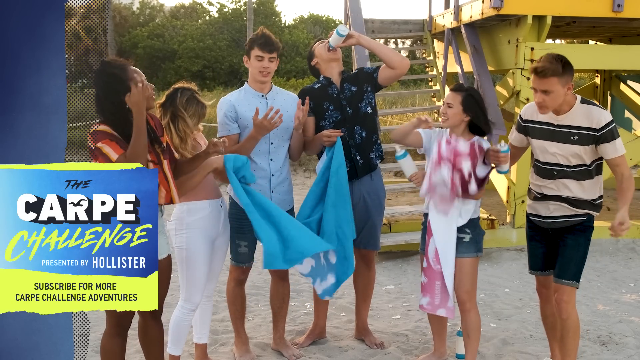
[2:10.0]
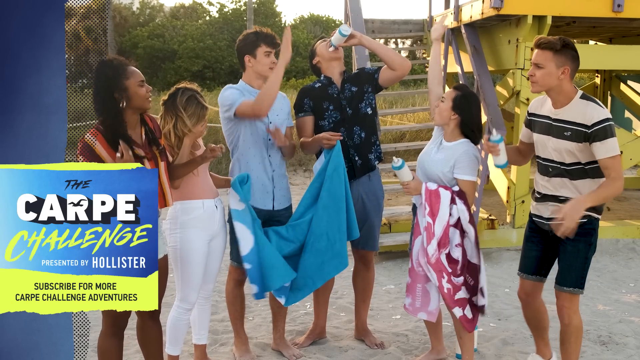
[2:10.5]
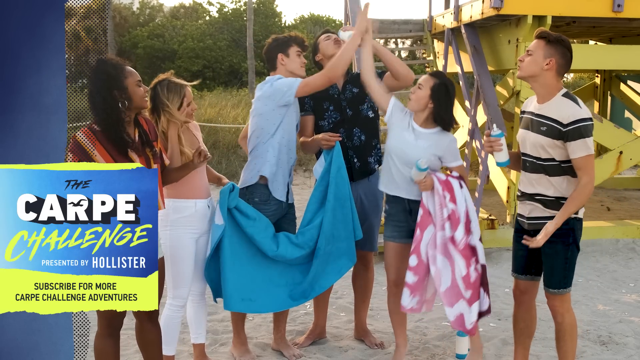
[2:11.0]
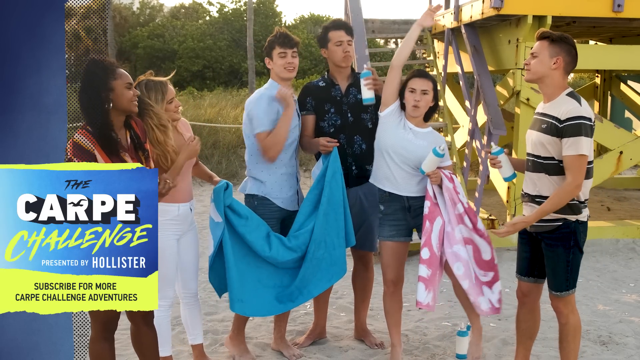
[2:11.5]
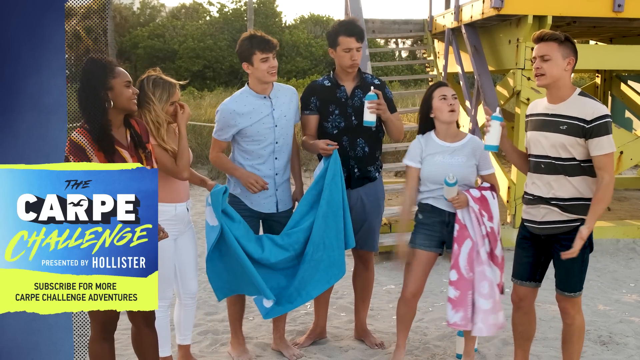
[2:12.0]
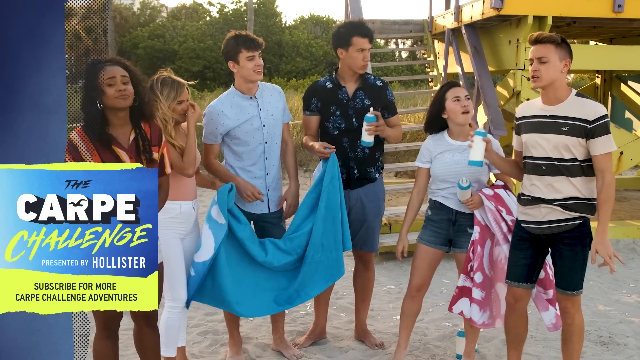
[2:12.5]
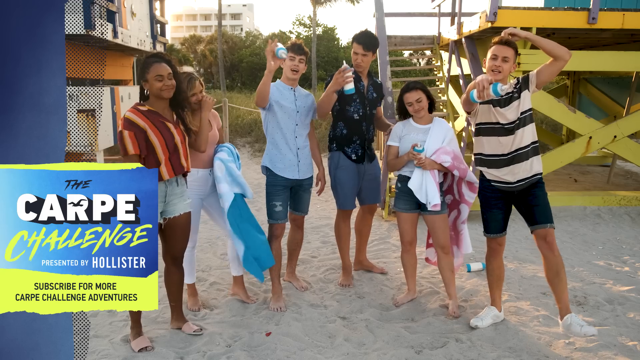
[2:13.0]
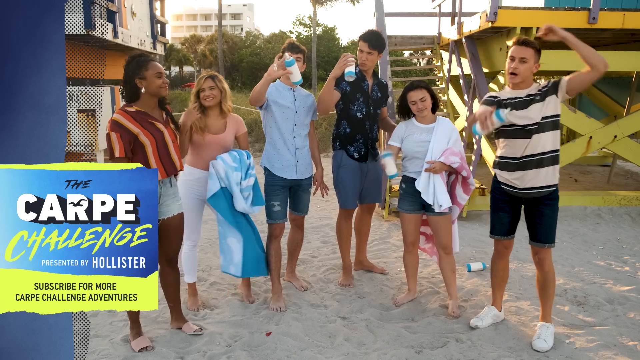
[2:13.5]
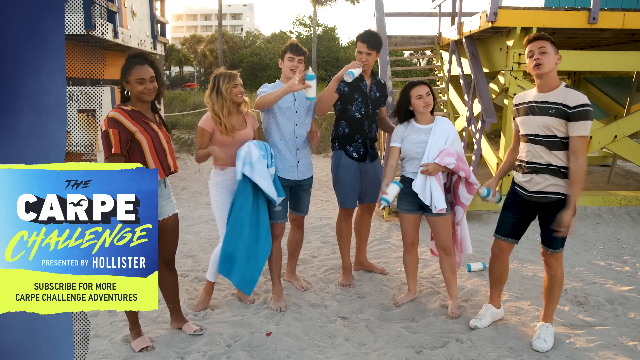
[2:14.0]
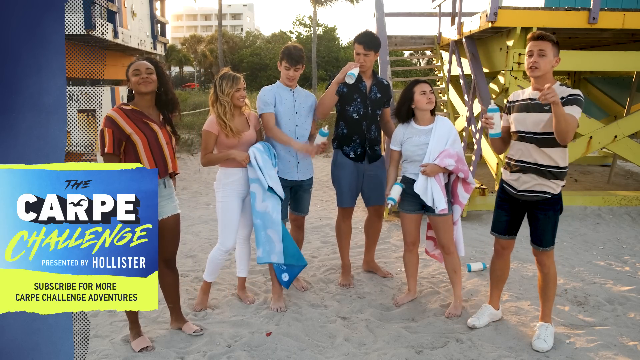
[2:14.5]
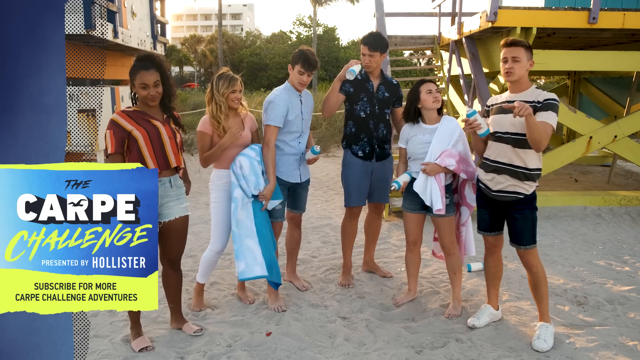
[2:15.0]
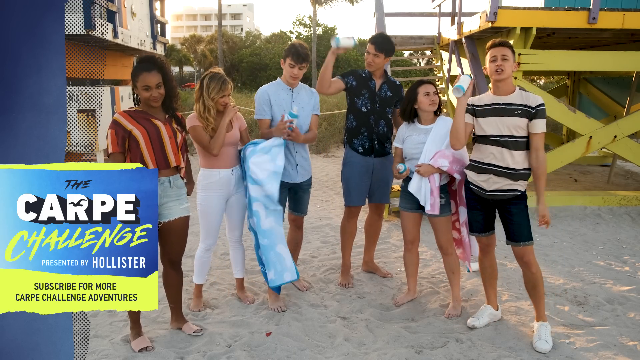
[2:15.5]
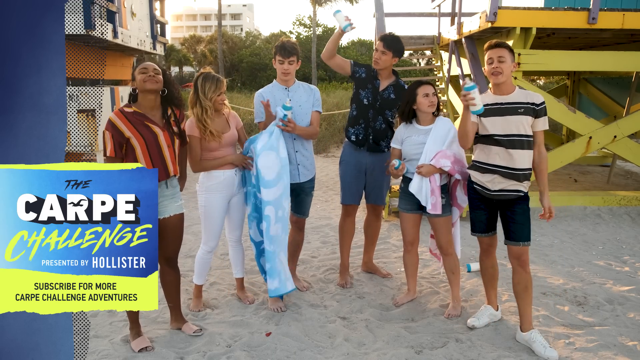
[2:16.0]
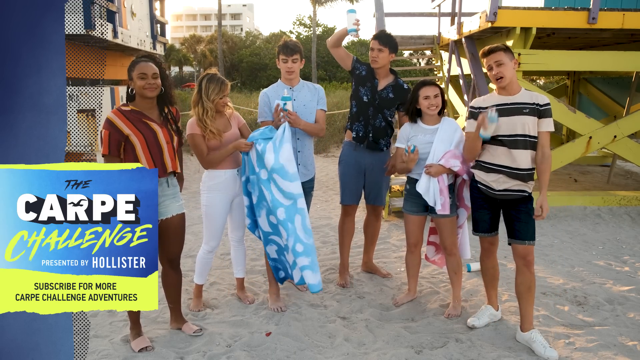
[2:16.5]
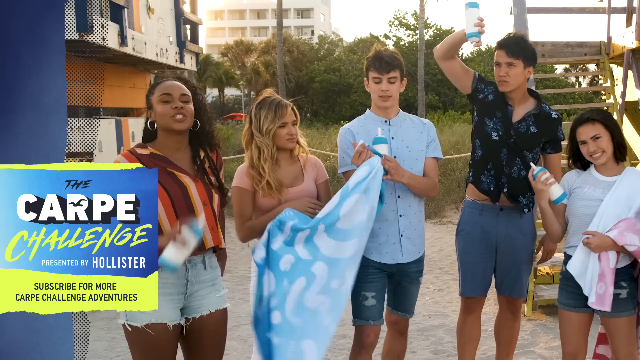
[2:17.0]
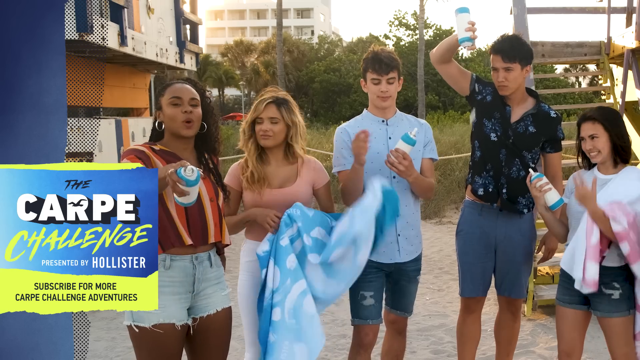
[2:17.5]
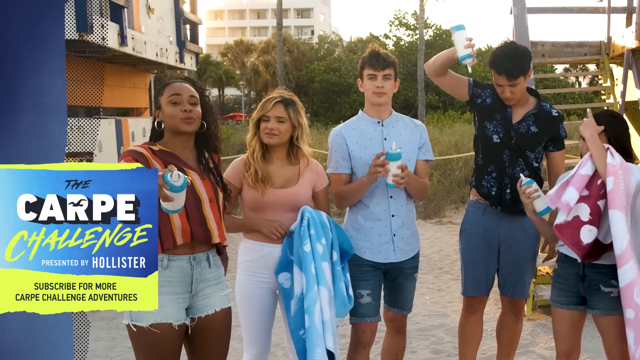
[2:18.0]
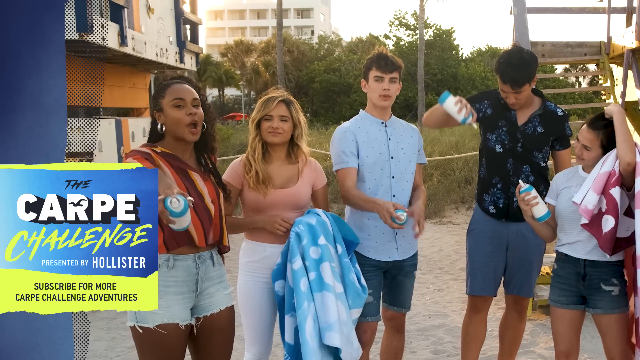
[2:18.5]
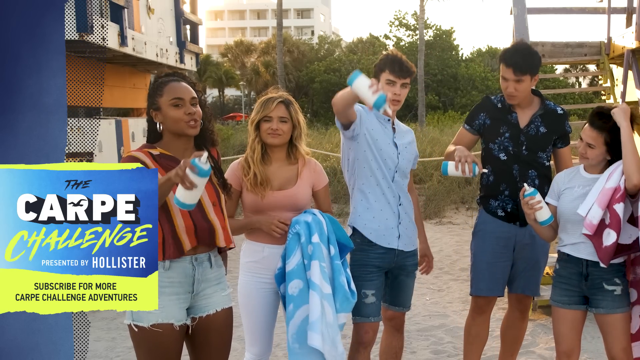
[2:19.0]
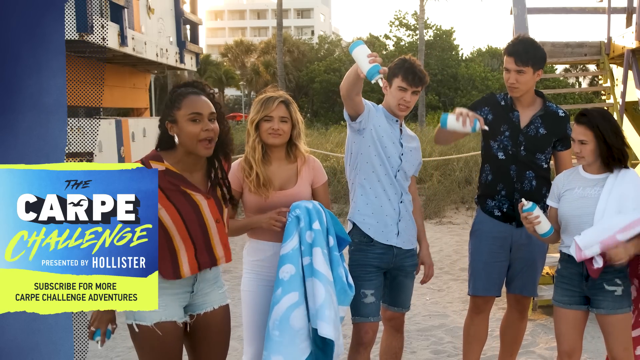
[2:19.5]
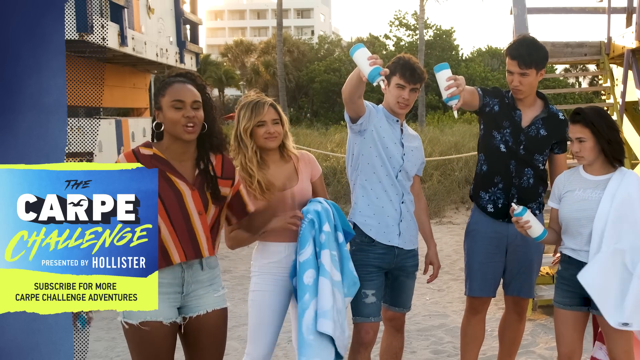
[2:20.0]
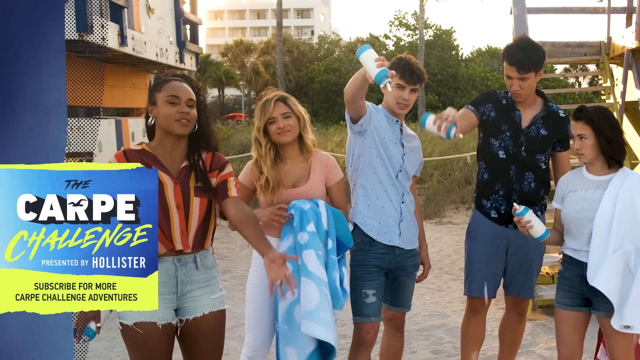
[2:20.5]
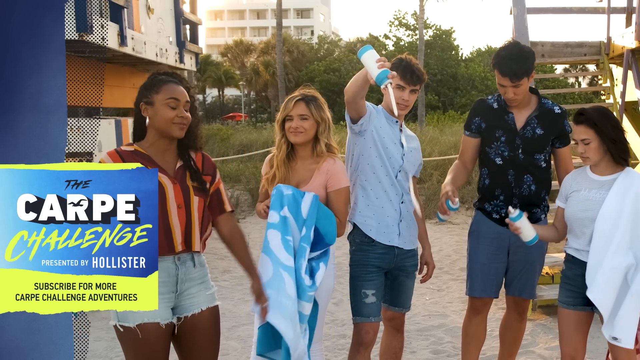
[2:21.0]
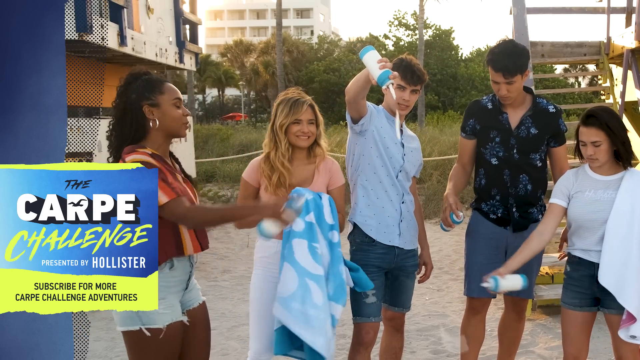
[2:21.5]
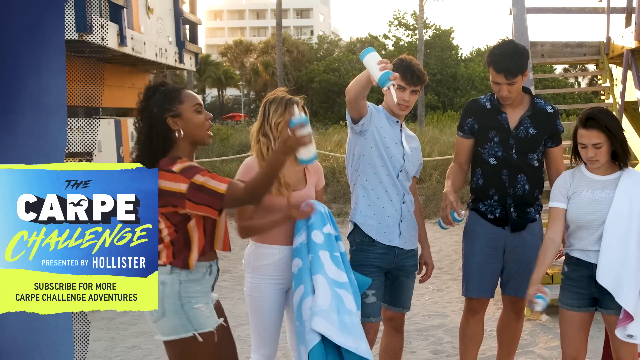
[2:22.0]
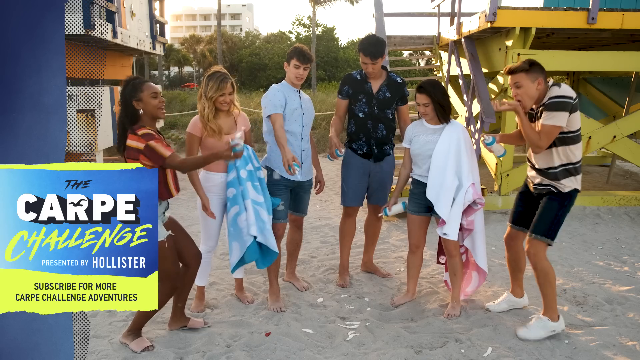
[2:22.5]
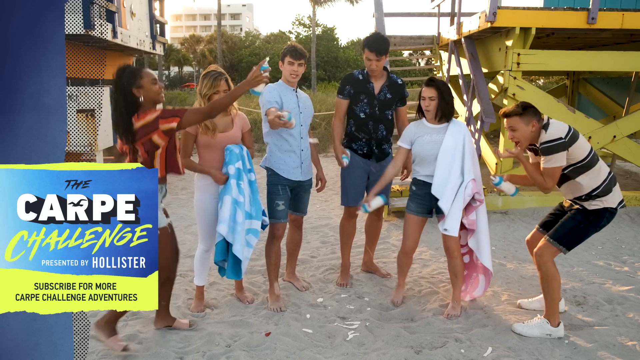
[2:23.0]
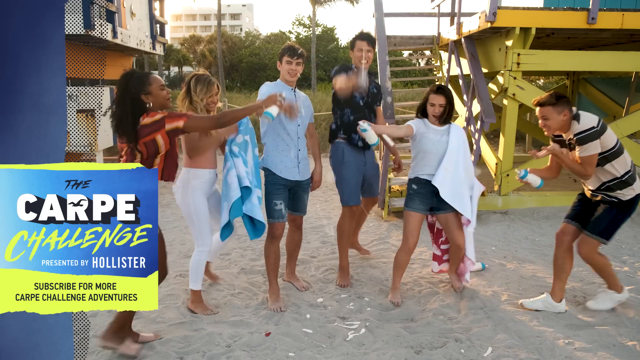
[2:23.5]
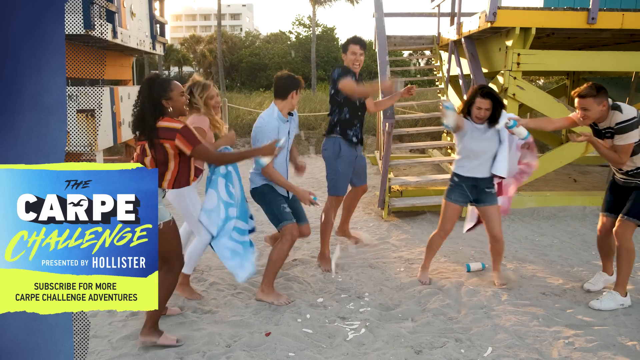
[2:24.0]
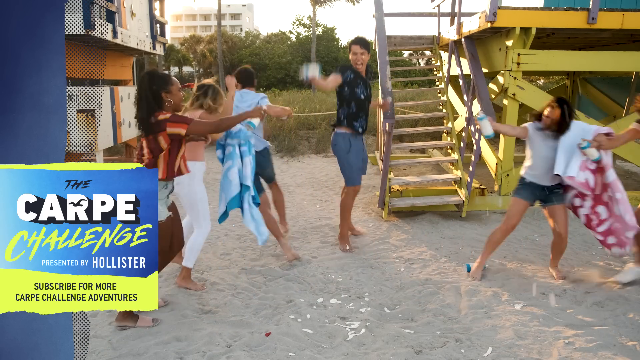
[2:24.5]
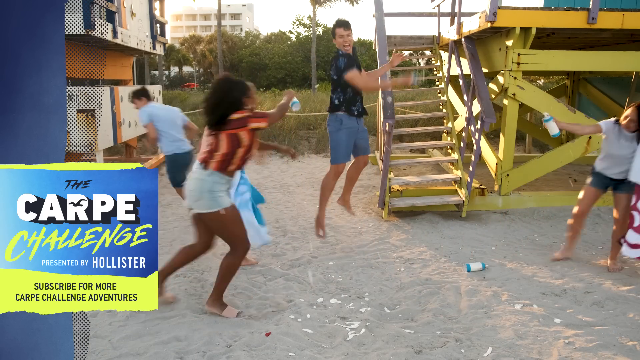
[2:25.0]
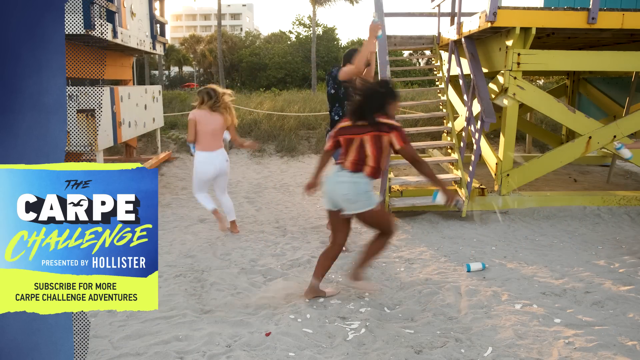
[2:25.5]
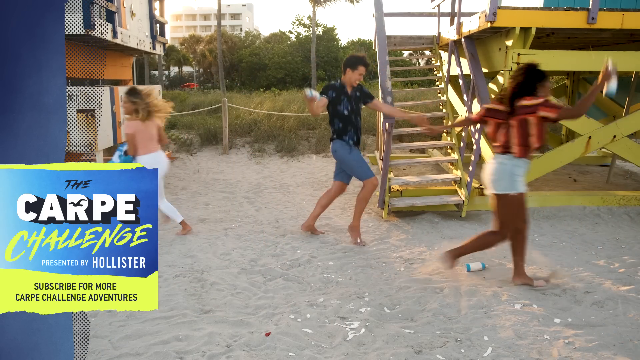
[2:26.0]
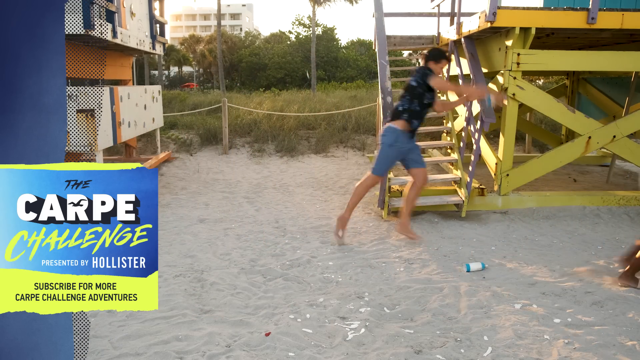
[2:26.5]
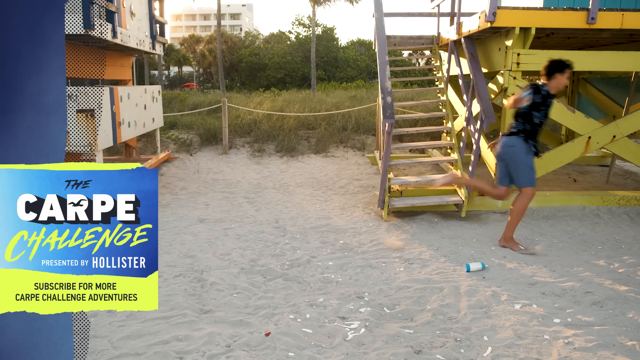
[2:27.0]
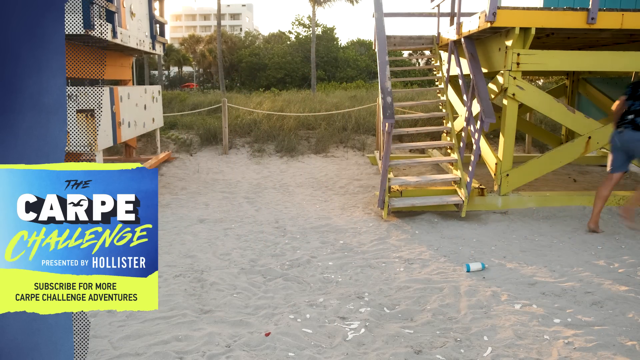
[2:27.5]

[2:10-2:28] Damon and Jojo resume their hosting duties to end the show: Damon talks into the camera, and then Jojo says something into the camera. Meanwhile the four participants are just having fun. Hayes takes a large dollop of whipped cream into his mouth directly from the can, and Hayley and Hayes high-five each other. Aaron and Hayes sort of drizzle some whipped cream directly from the can onto the sand. Then they all sort of go crazy, spraying whipped cream all over each other while running away from each other so they don't get whipped cream on them. The screen says "the carpe challenge is presented by Hollister", asks viewers to subscribe to the channel on YouTube, and offers two more videos by this group of teens.